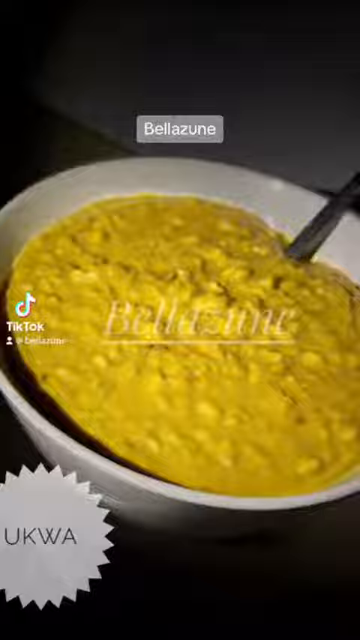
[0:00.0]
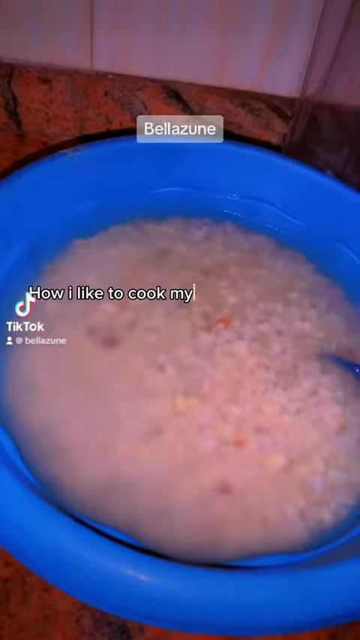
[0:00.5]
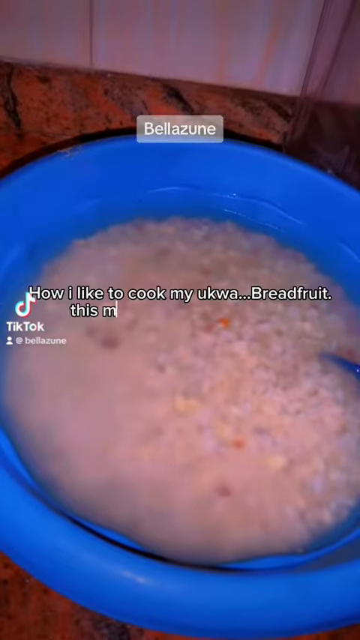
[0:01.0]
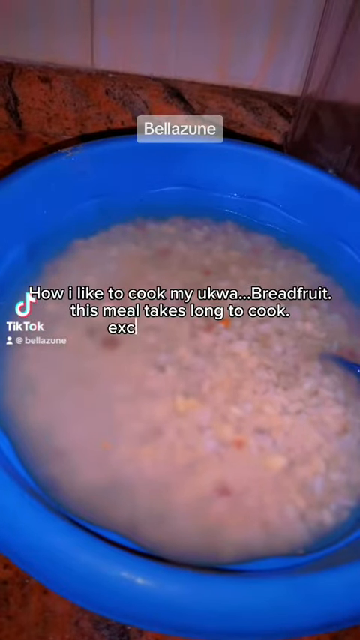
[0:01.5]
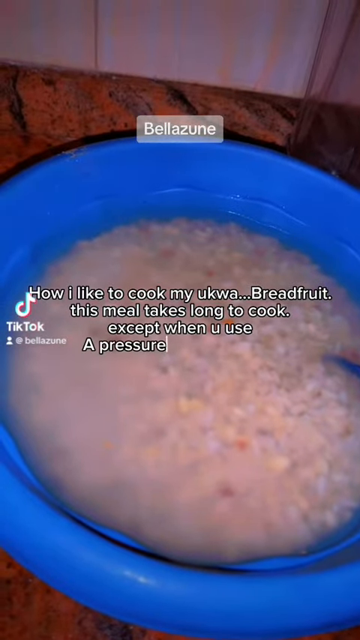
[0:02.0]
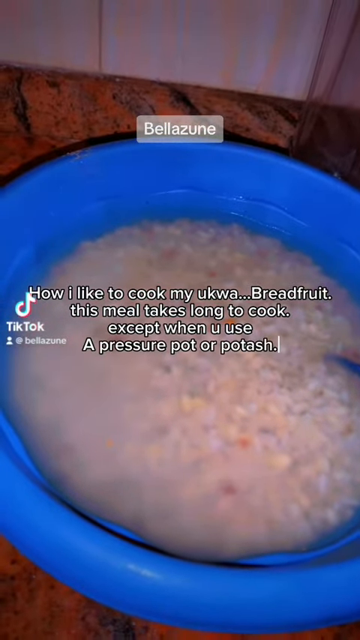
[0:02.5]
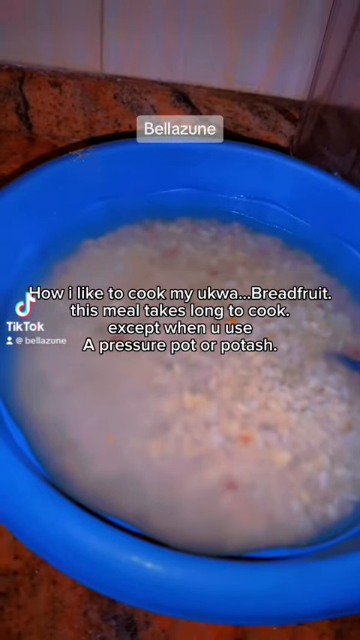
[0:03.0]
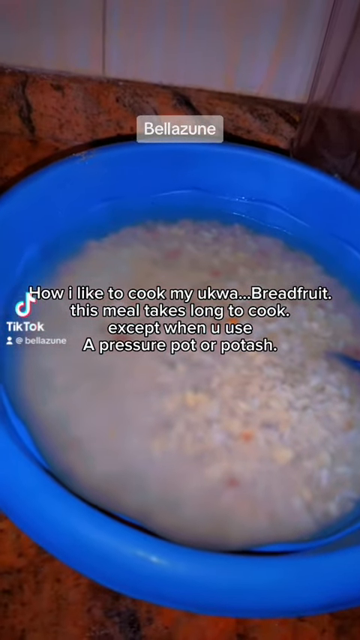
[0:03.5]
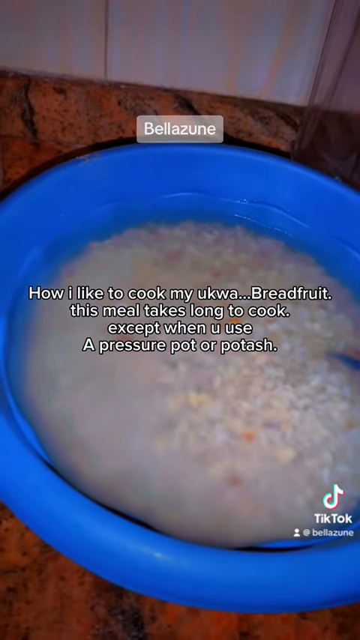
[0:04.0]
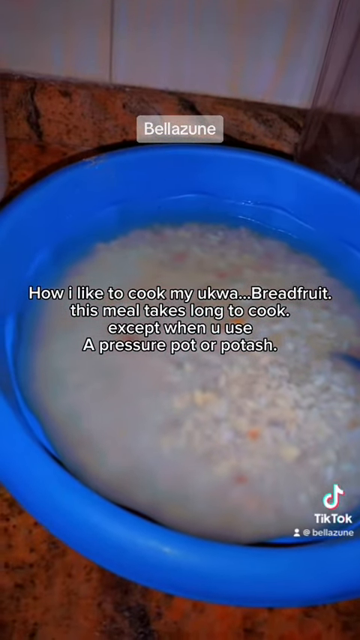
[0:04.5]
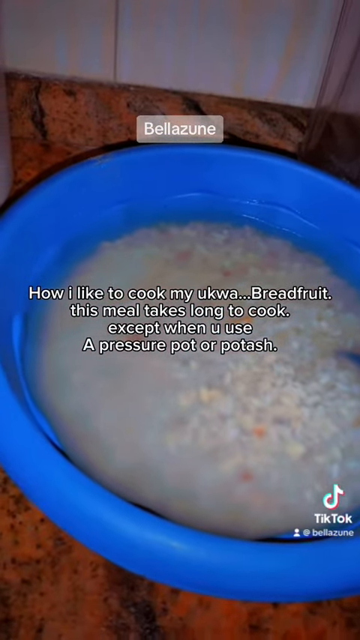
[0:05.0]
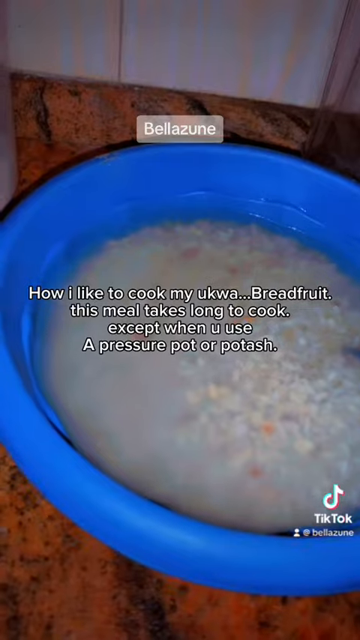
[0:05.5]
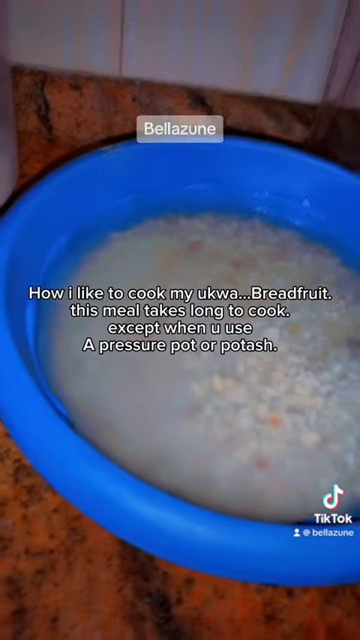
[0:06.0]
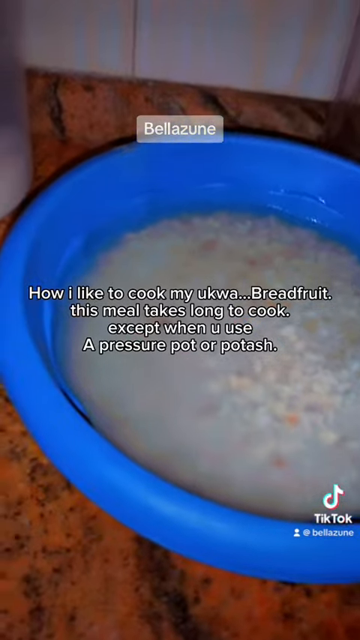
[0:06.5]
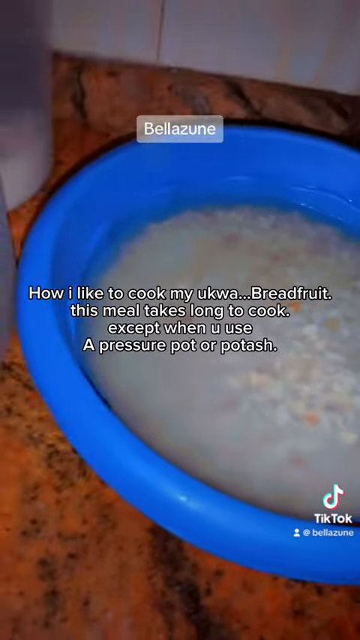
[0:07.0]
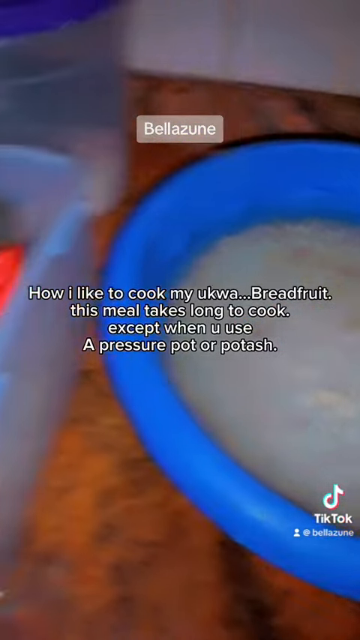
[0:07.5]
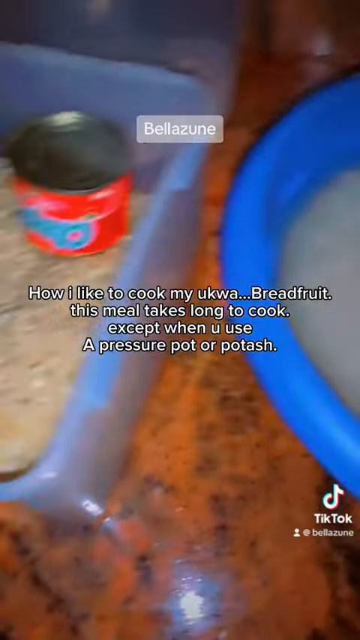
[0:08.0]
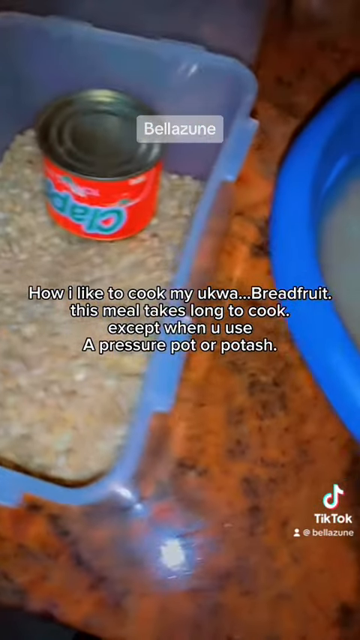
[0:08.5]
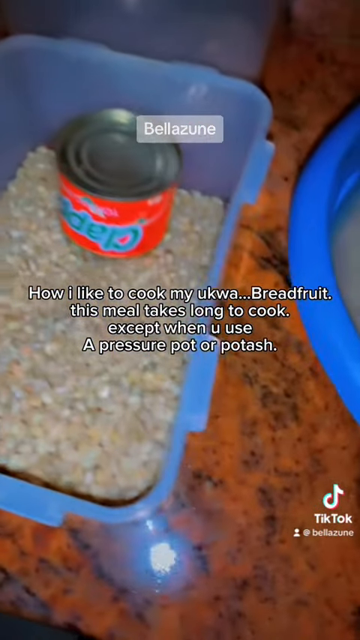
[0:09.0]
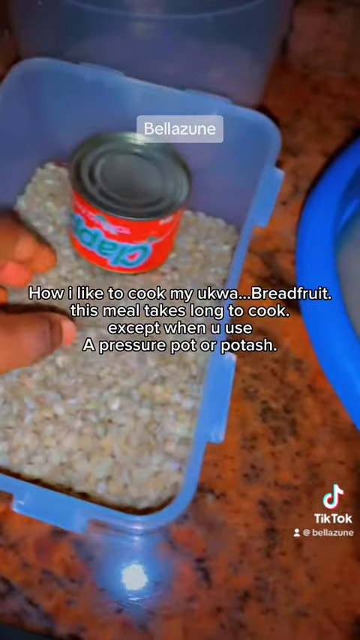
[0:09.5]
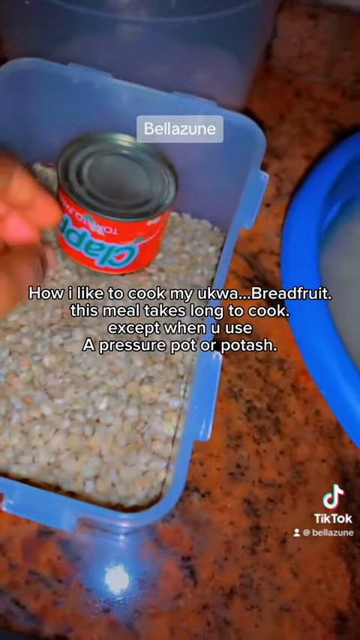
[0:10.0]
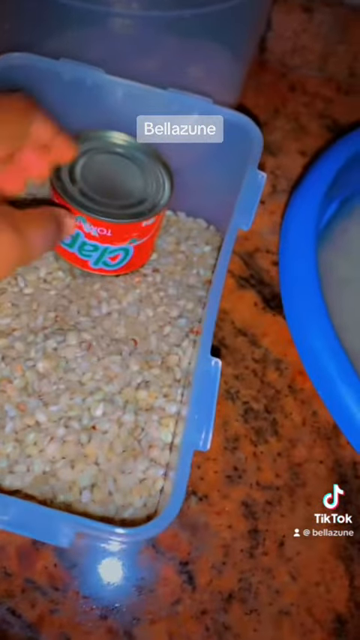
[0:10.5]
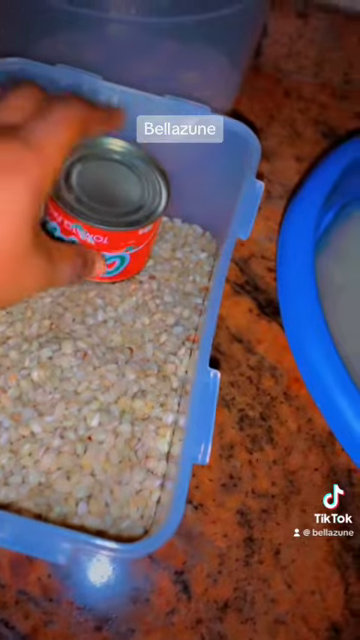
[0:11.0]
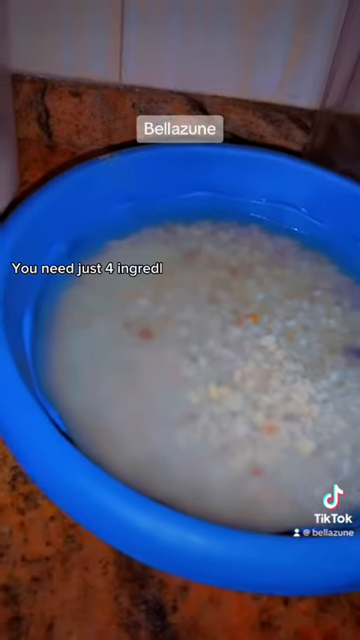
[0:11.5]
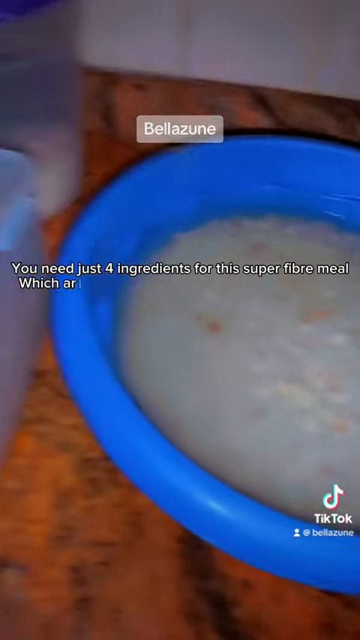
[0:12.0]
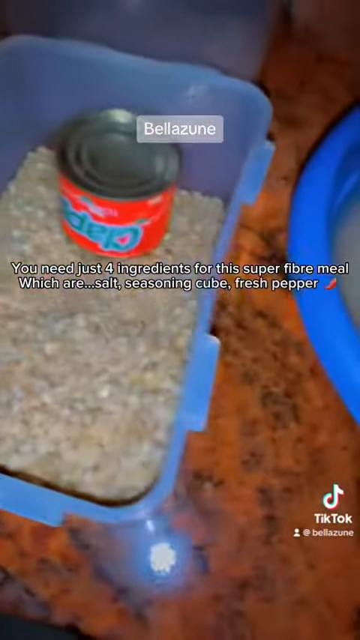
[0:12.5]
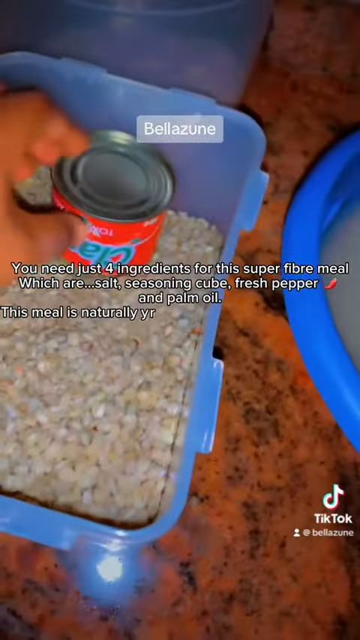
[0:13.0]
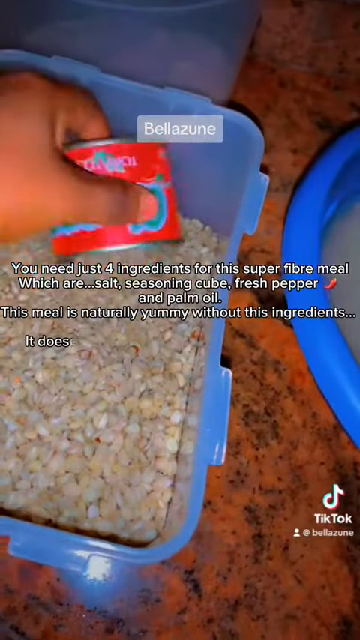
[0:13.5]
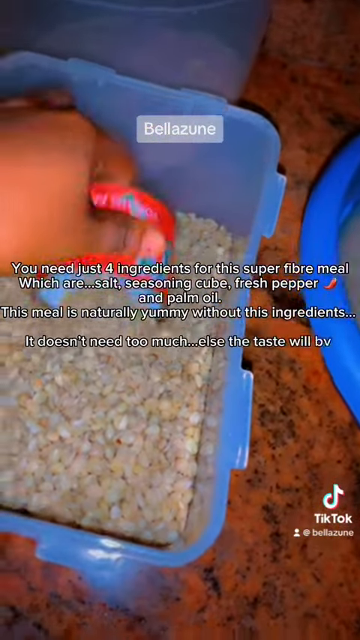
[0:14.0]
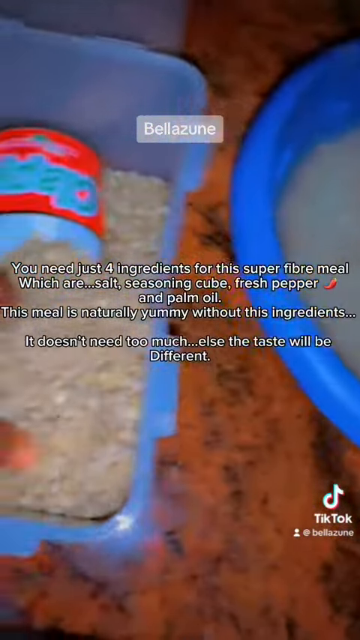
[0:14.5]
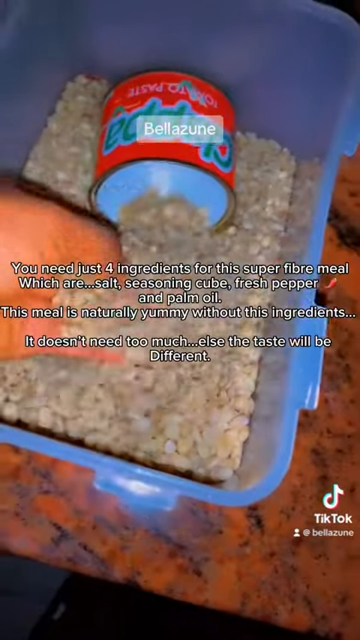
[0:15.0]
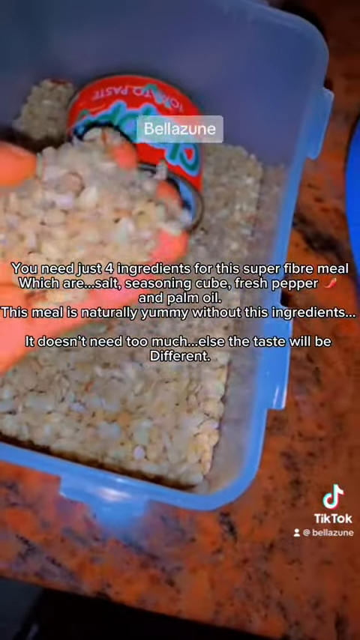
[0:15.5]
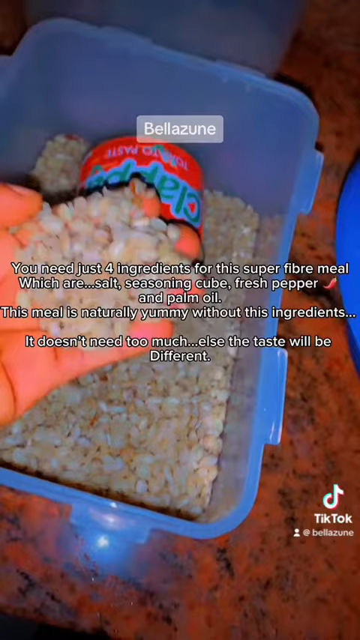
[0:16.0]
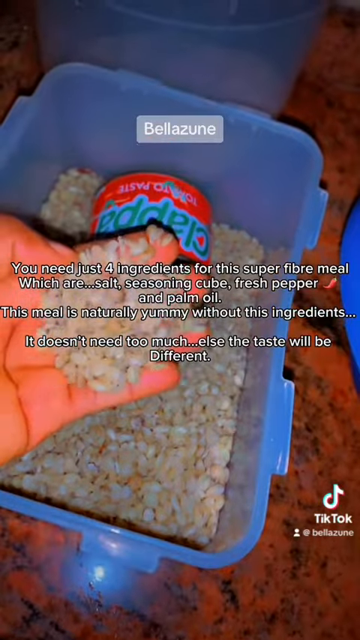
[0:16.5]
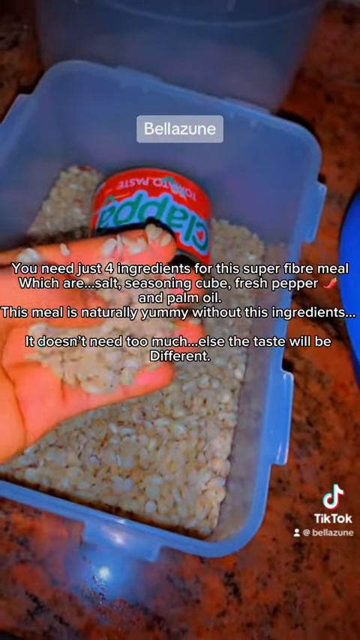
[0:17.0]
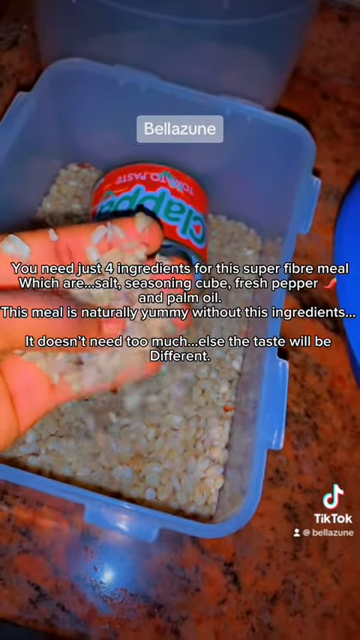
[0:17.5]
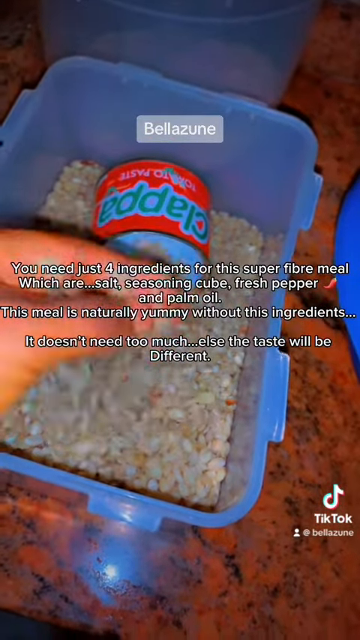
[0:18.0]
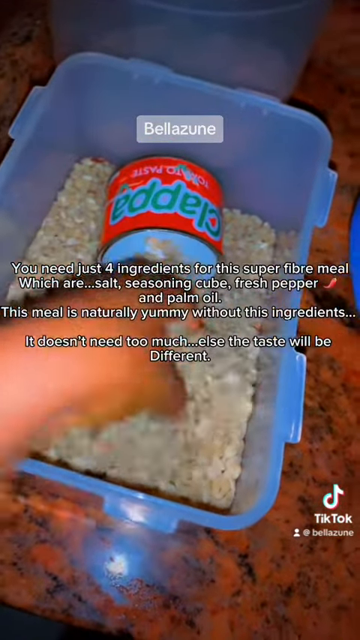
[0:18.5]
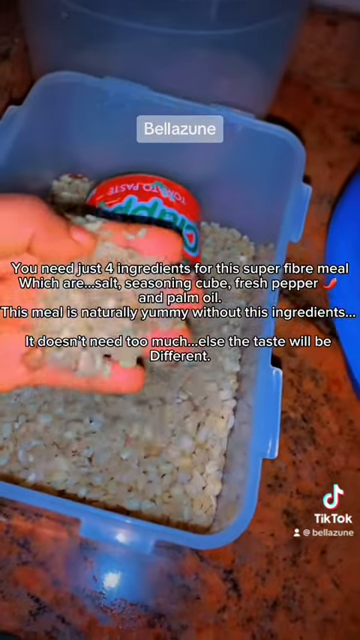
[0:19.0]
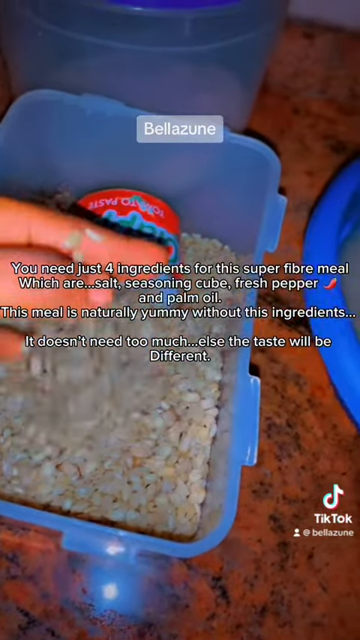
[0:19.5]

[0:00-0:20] The video is in portrait format and its quality looks extremely poor. The top of the screen is dark, and below it is a grey or white bowl full of yellow food. "Bellazune" appears at the top and also as a watermark across the middle of the food. A TikTok logo with "TikTok" written underneath it is on the left-hand edge in the centre of the image, and in the bottom left-hand corner a star graphic reads "UKWA". The video quickly cuts to a blue dish, again poorly filmed. The Bellazune graphic is still up, and captions type on: "How I like to cook my ukwa... Breadfruit. this meal, takes long to cook. except when u use a pressure pot or potash." The view moves across to the next small storage box full of some kind of food, and the caption reads: "You need just four ingredients for this super fibre meal Which are... salt, seasoning cube, fresh pepper and palm oil. This meal is naturally yummy without this ingredients... It doesn't need too much... else the taste will be Different." A hand comes in and picks up some sort of chopped-up items in the blue bowl, where there is also a small red tin with unidentified contents.